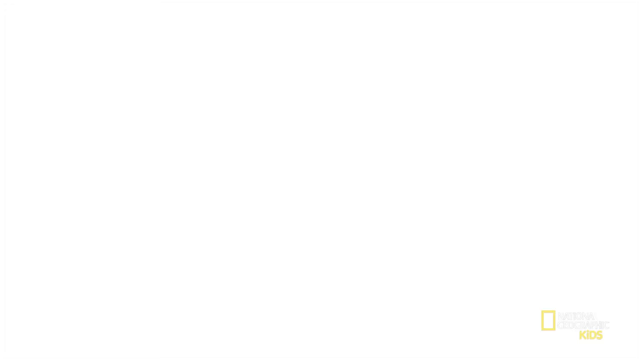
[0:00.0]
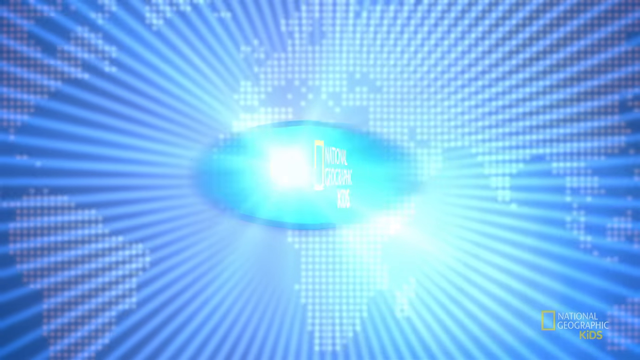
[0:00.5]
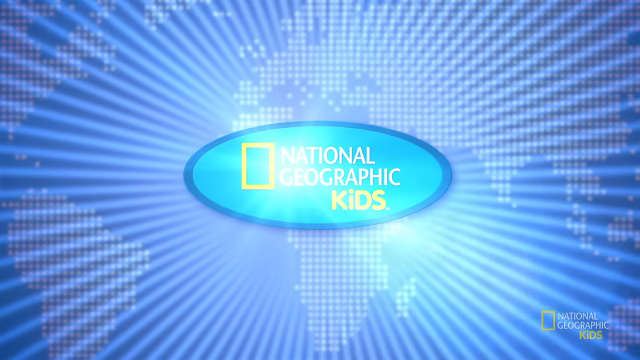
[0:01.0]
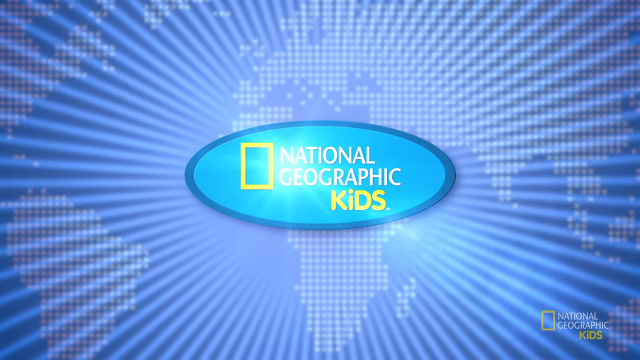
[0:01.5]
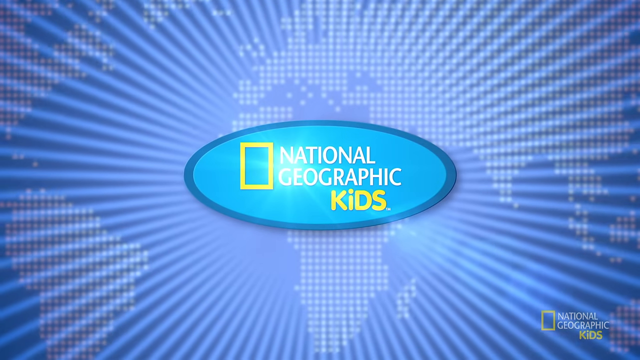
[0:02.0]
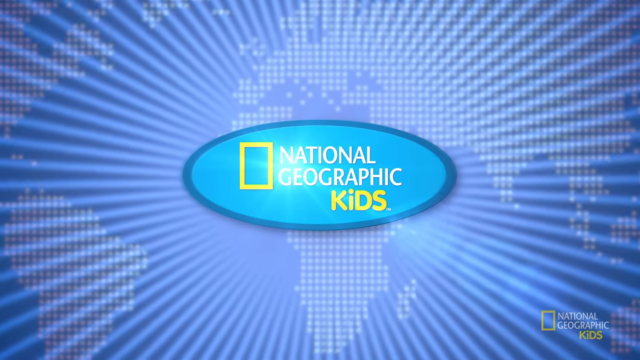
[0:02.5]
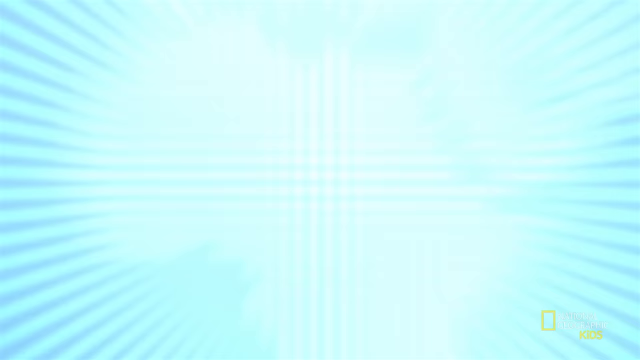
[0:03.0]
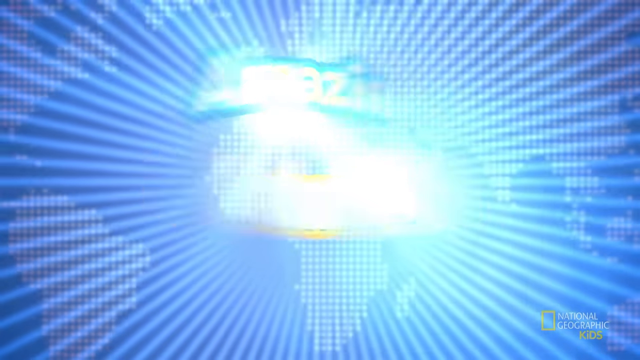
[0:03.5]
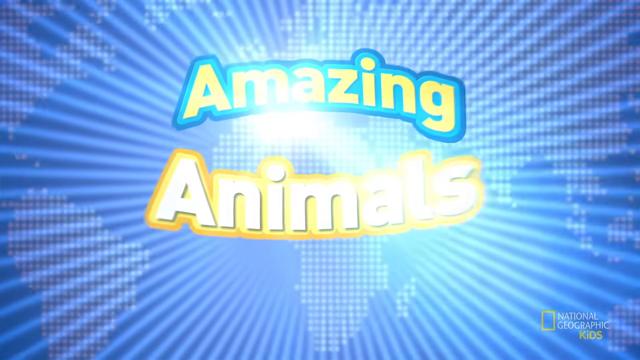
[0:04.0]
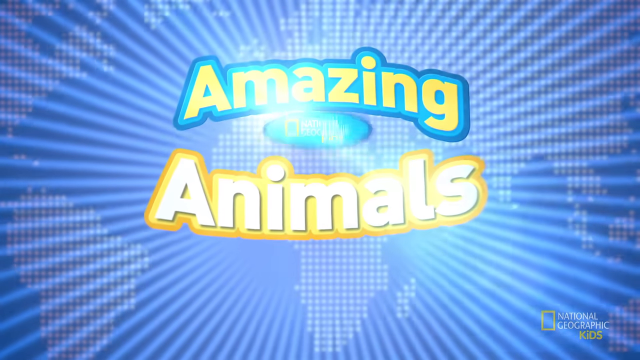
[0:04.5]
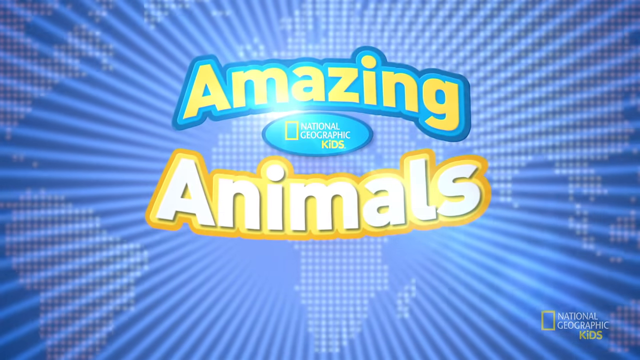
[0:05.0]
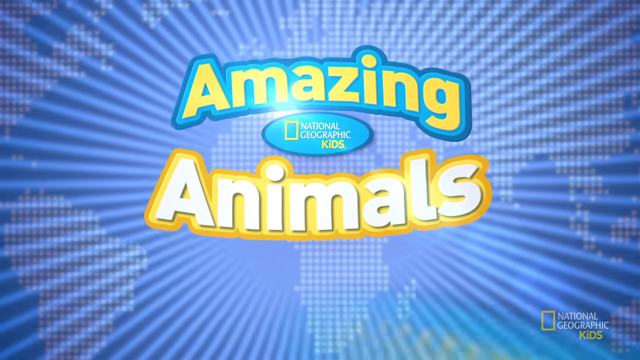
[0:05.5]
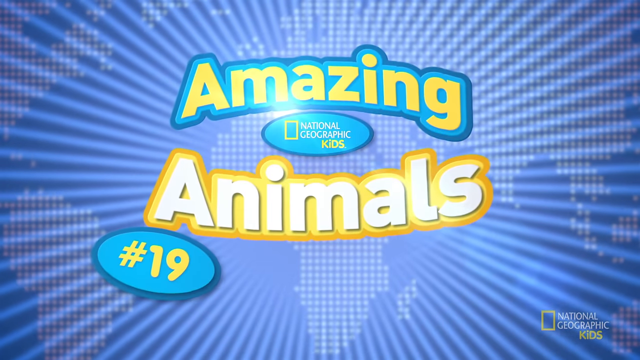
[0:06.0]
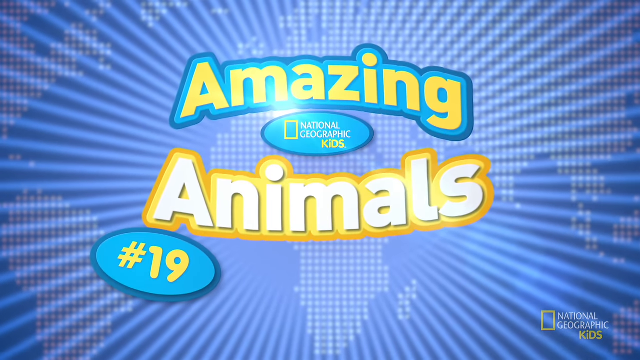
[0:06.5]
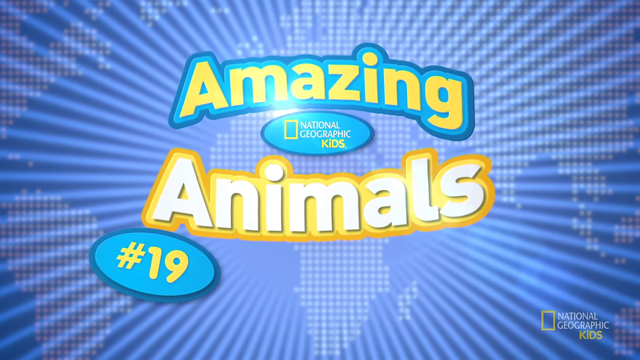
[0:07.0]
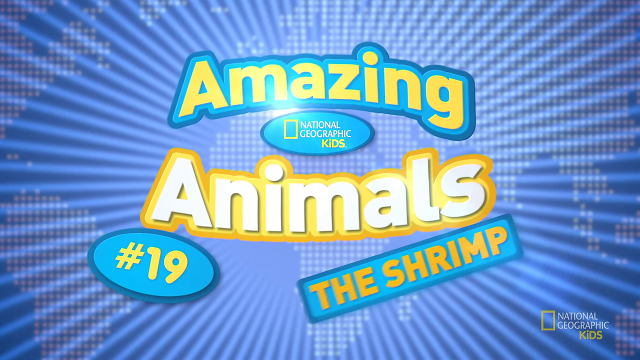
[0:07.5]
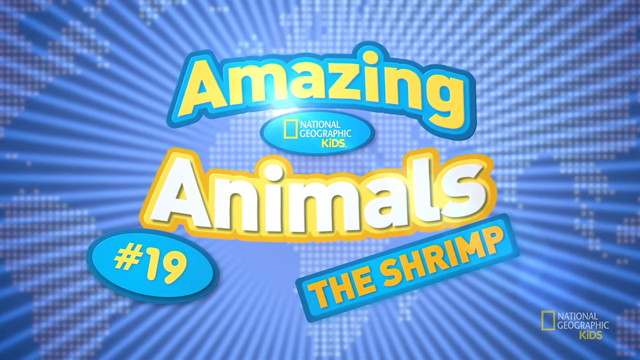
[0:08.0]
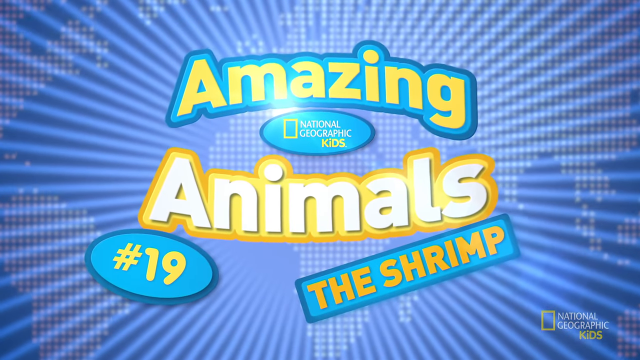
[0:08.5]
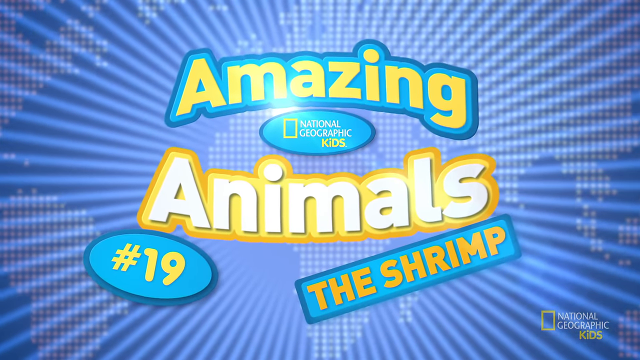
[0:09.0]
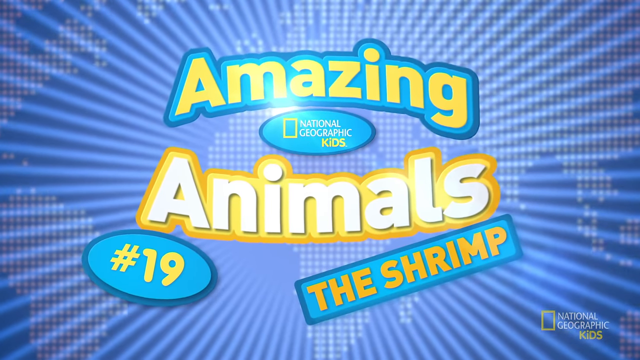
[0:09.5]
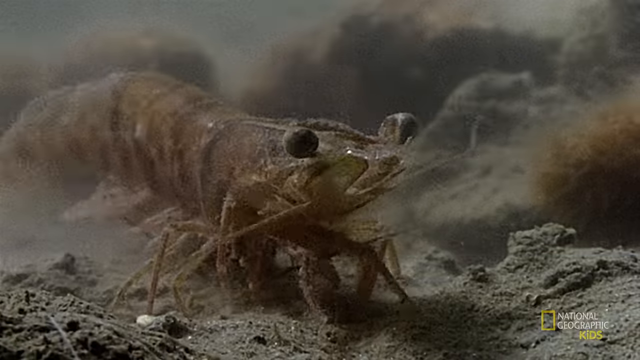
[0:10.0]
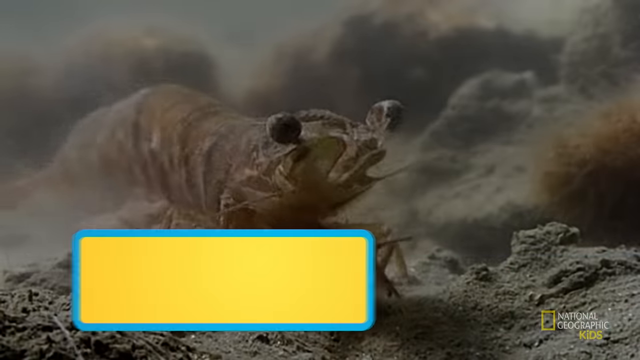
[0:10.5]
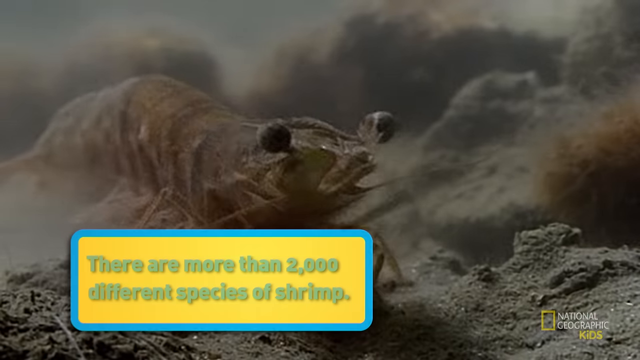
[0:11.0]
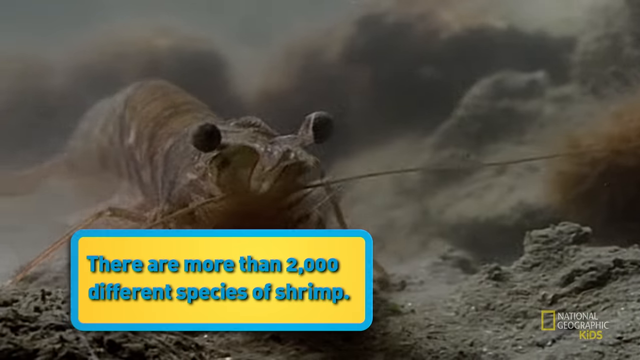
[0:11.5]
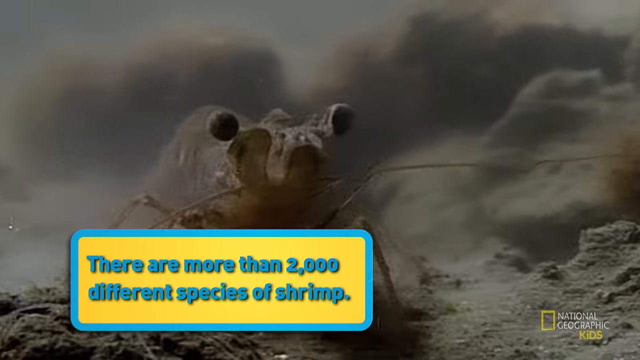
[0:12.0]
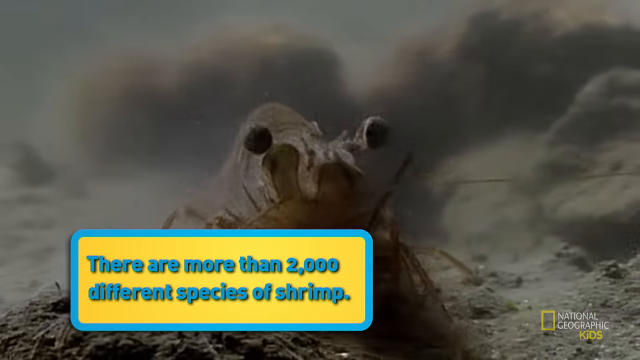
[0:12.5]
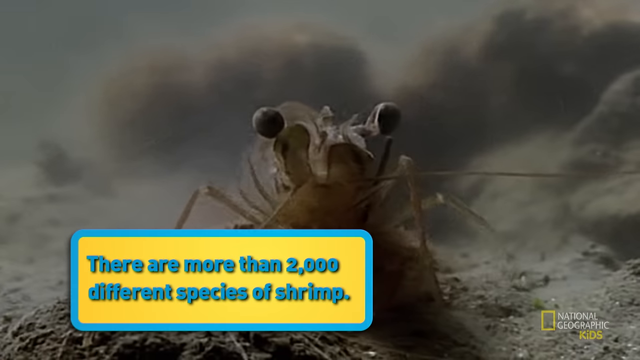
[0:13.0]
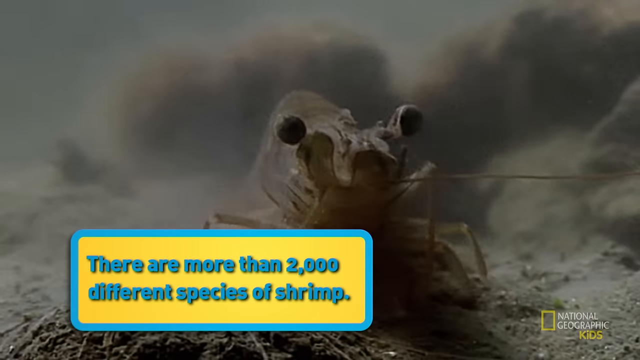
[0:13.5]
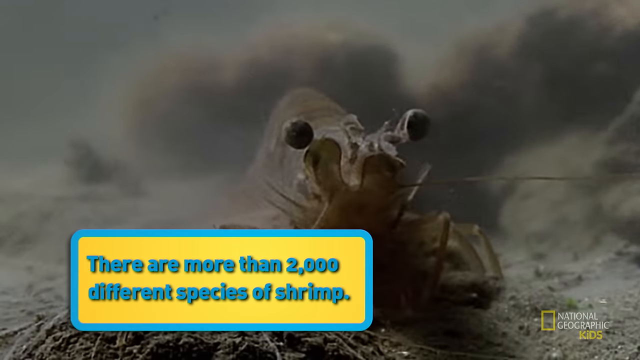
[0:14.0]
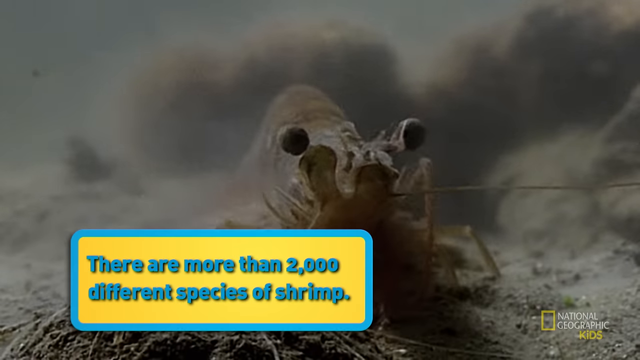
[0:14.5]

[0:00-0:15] The video is from Amazing Animals by National Geographic Kids and is identified as number 19 in the series, The Shrimp. On-screen text reads "there are more than 2,000 different species of shrimp." A tan shrimp with big black eyes and multiple legs is on the bottom of the ocean, walking through the dirt. It looks a little bewildered and seems like it could possibly be stuck in the dirt, since it does not move far and mostly stays in one spot. It faces the camera.